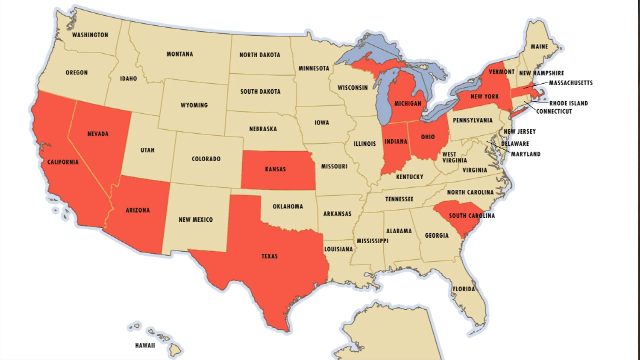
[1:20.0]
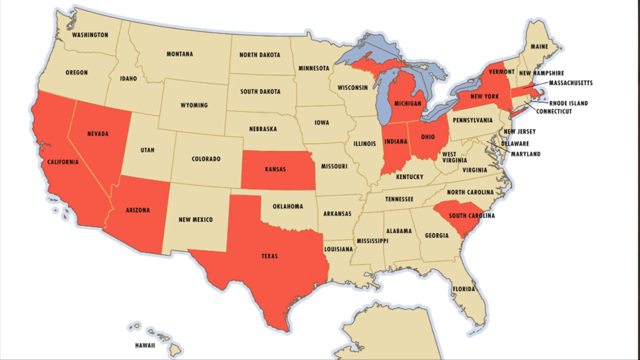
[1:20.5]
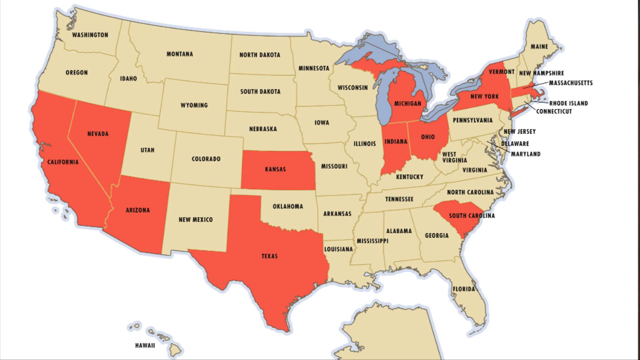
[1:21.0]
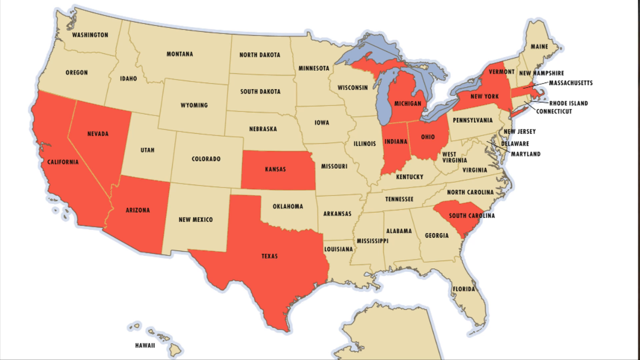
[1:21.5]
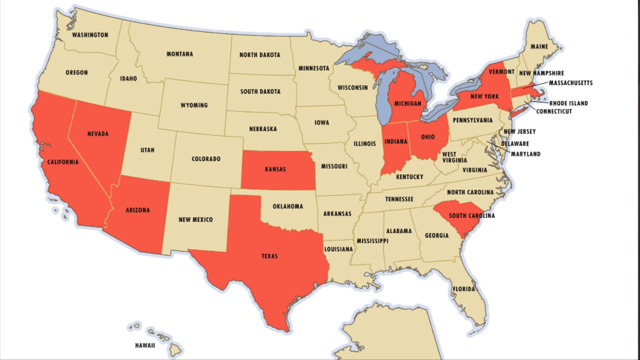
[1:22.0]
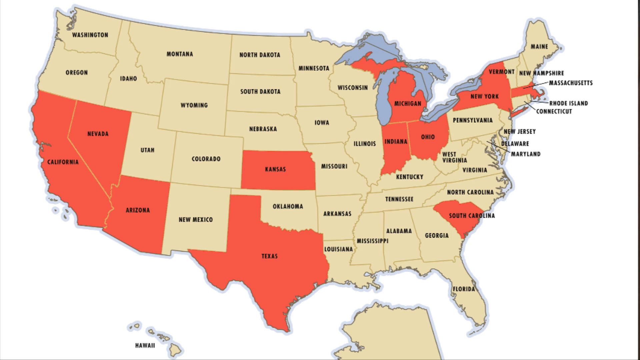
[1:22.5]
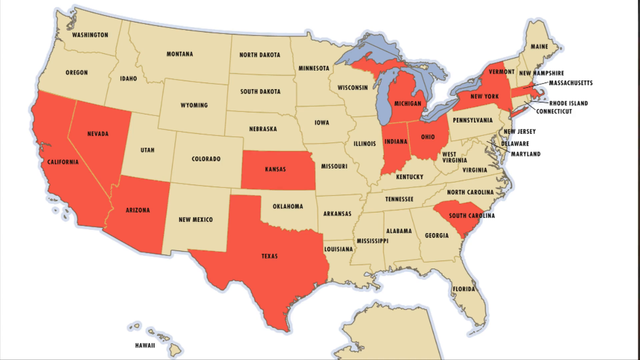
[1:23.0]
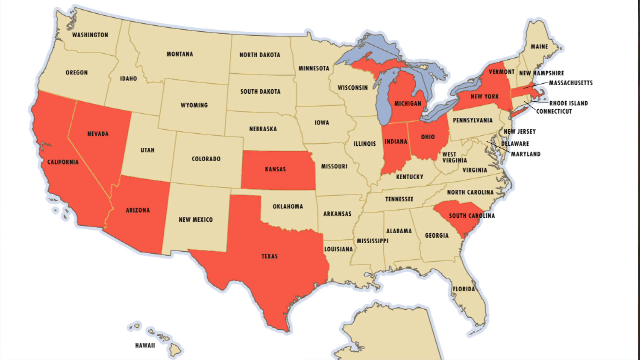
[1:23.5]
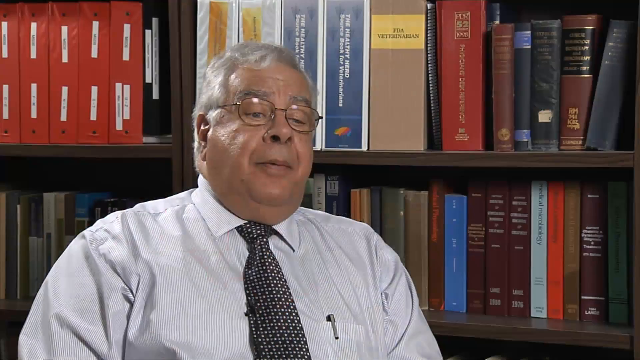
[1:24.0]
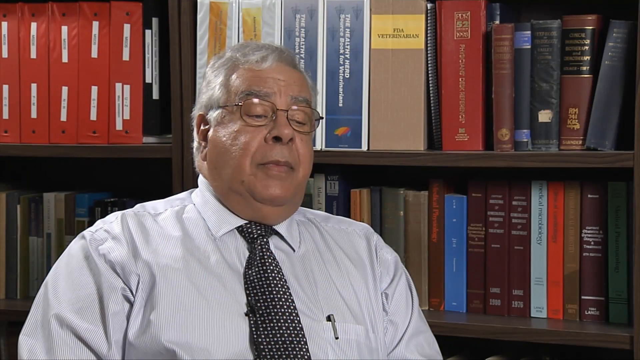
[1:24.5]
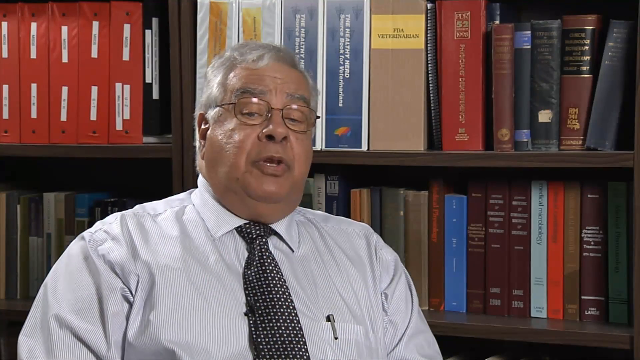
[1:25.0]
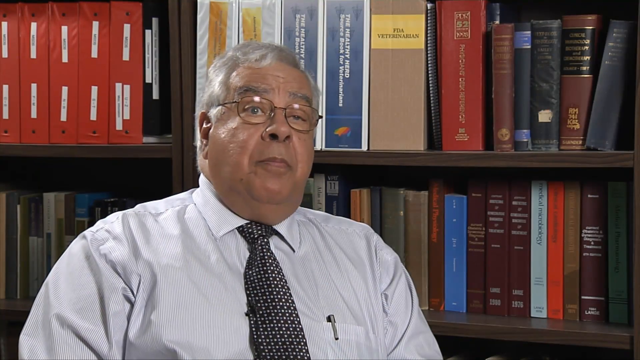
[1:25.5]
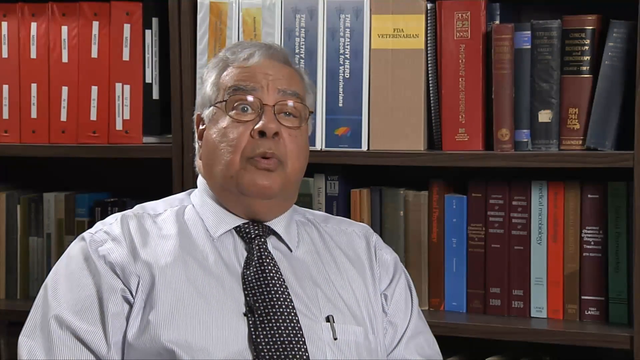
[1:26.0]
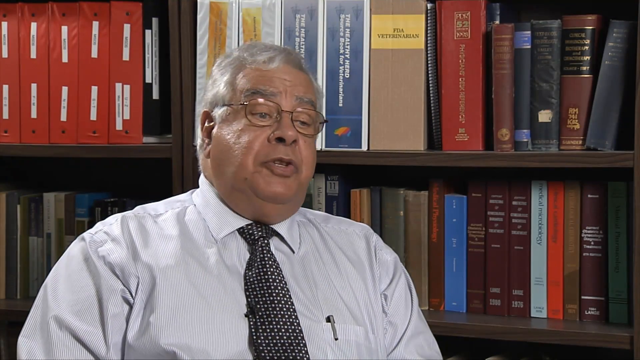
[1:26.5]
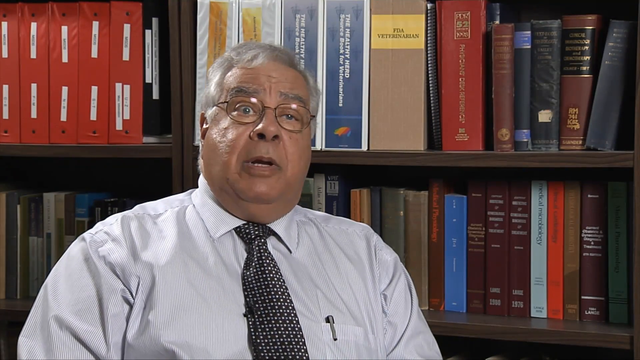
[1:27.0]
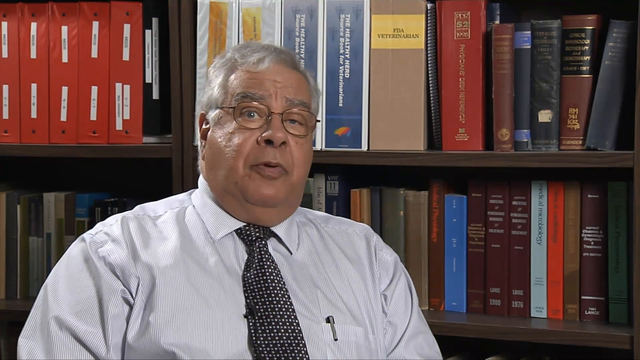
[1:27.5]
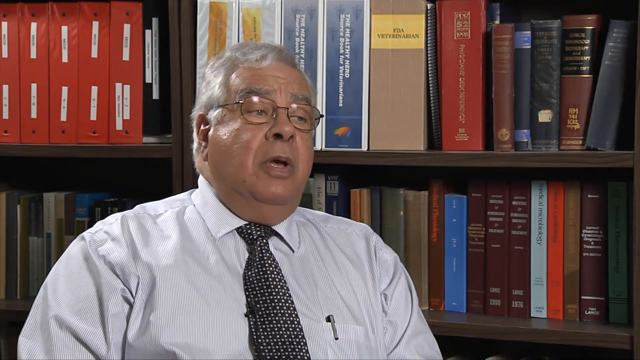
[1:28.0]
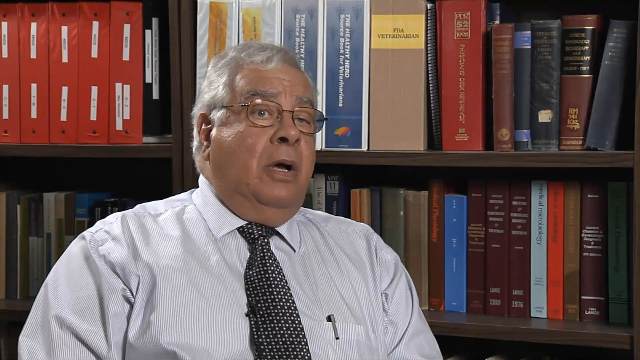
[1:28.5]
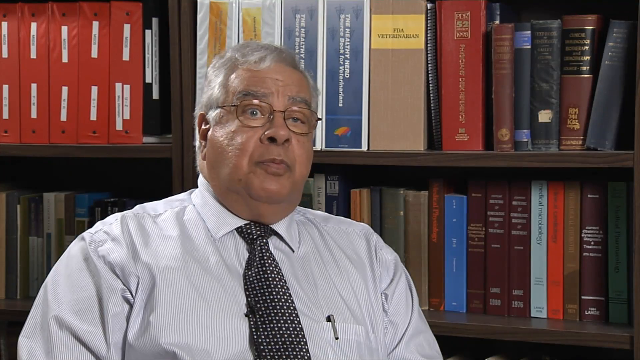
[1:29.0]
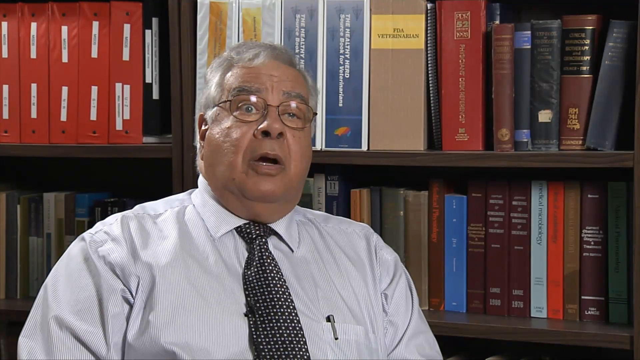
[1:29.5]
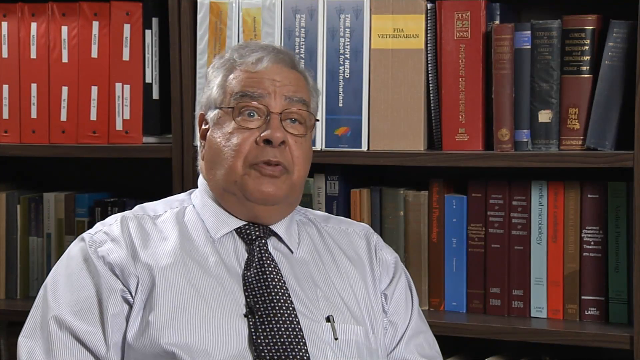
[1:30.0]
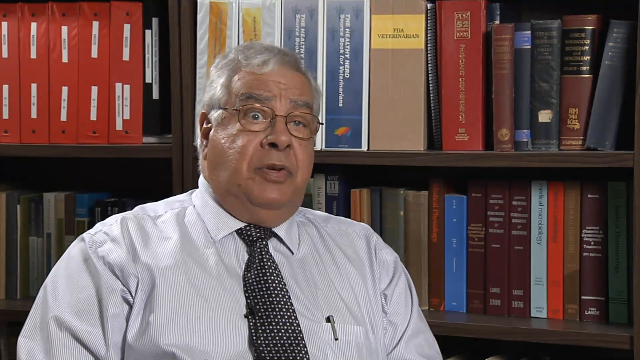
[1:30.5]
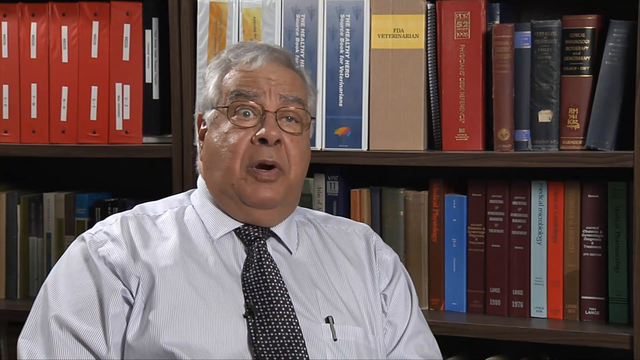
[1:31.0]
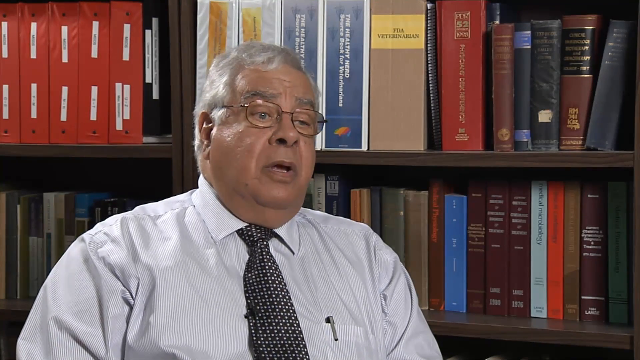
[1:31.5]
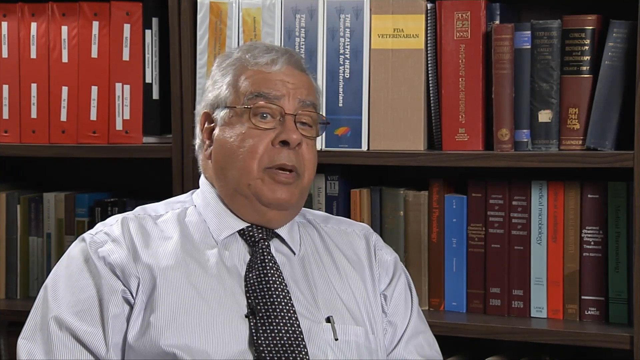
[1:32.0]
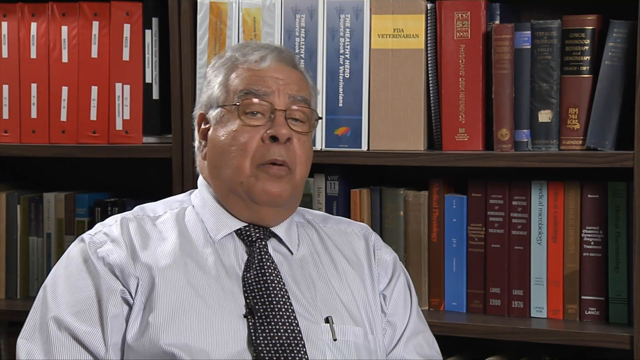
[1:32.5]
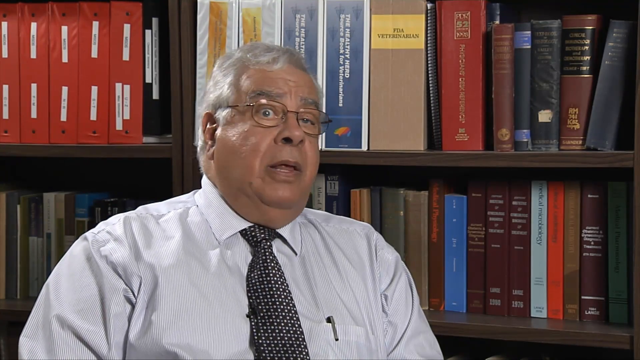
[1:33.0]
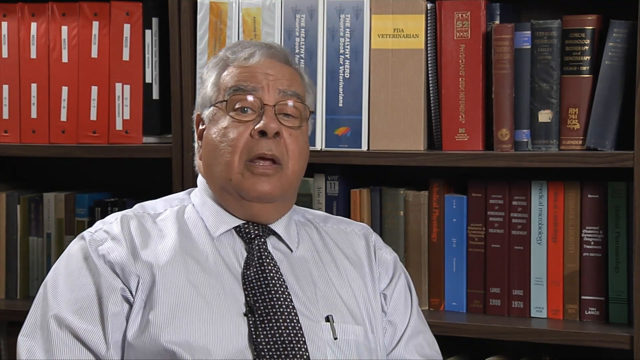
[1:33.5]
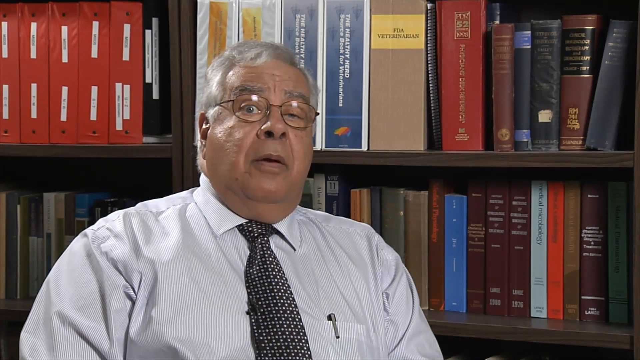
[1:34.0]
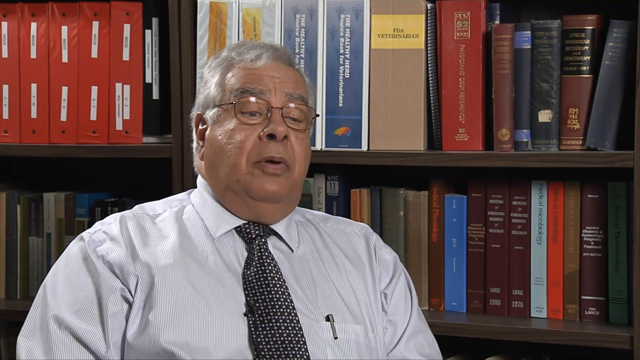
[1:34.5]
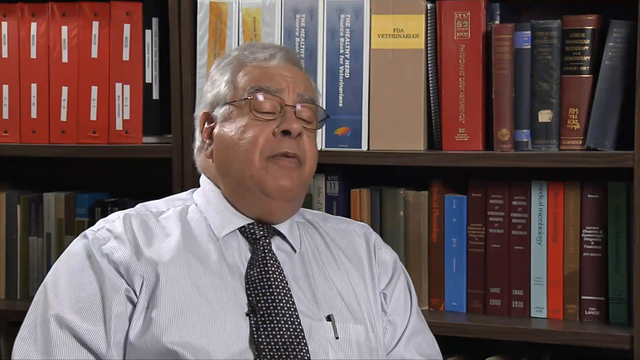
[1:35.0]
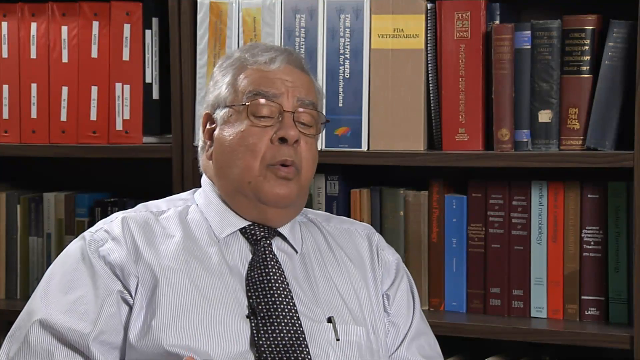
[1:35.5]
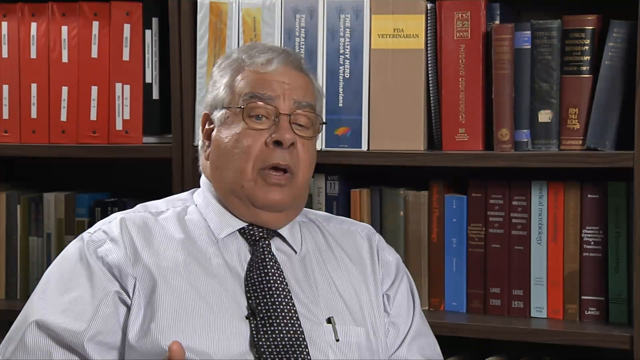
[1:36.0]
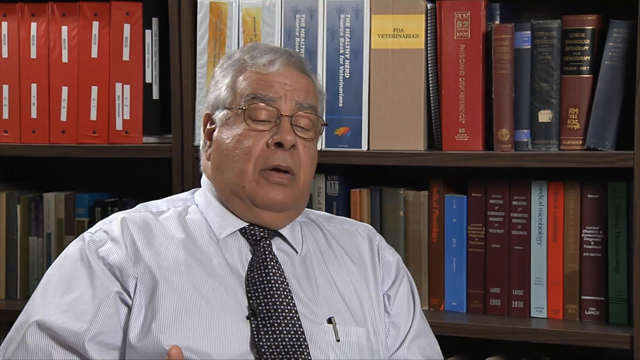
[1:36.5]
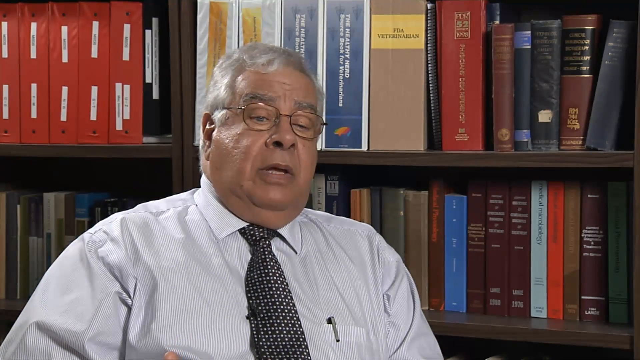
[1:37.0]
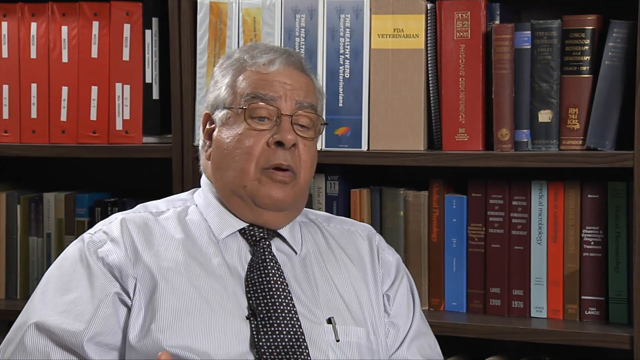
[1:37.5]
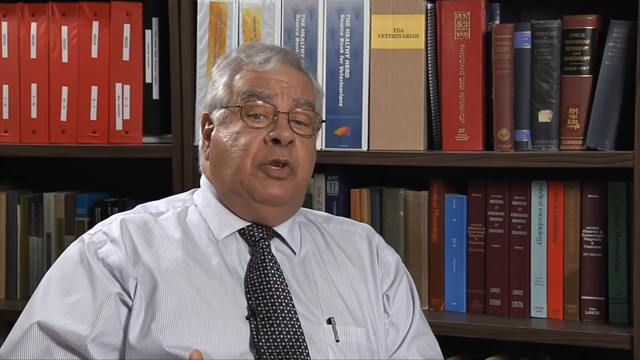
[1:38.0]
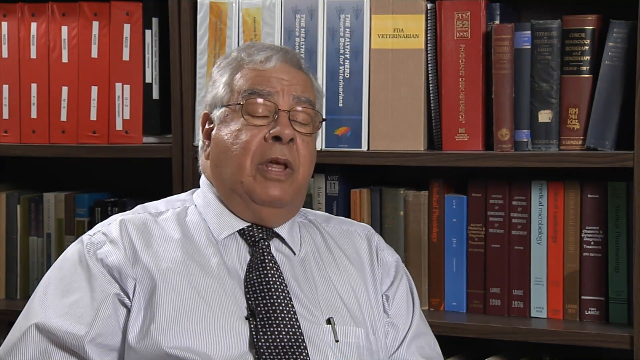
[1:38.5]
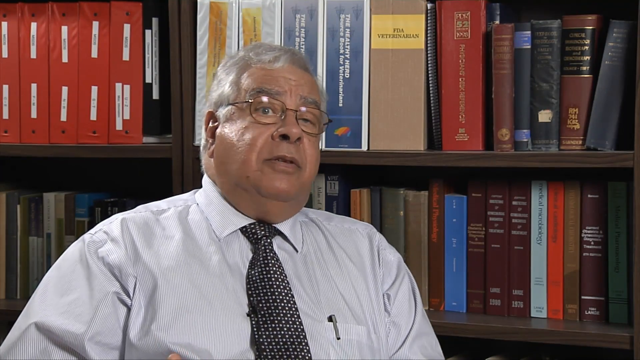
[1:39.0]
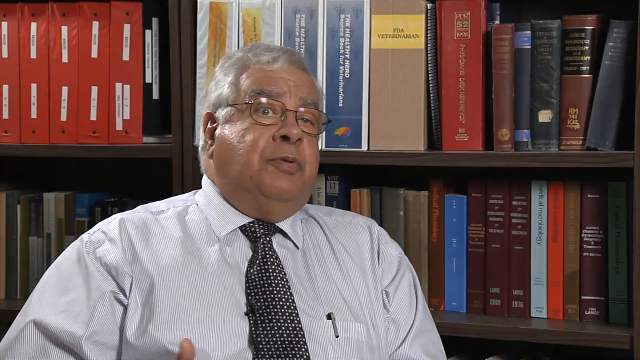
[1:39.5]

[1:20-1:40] The same illustration of the U.S. map, color-coded red, yellow and gray in areas, is shown, with no key. The video then cuts back to the same doctor, wearing the same clothes, in front of a backdrop of shelving with books, either an office or a library. Red presumably marks the more severe areas and yellow possibly the next most severe.